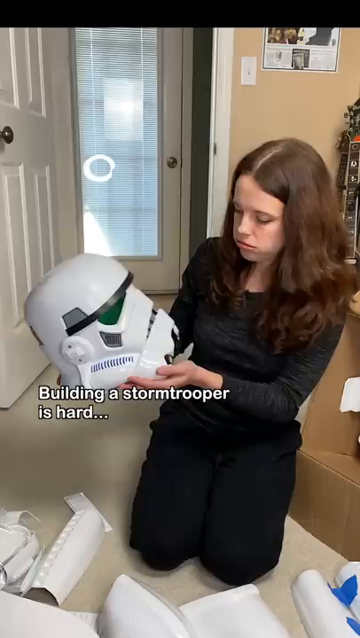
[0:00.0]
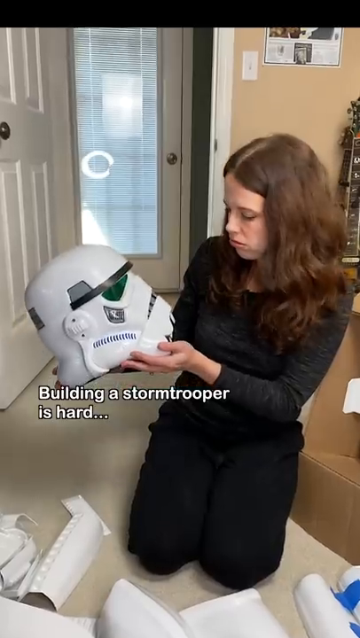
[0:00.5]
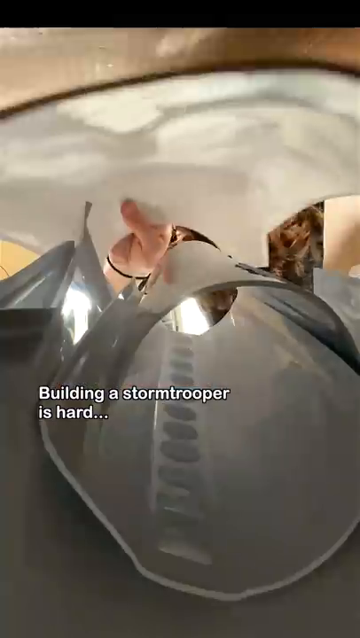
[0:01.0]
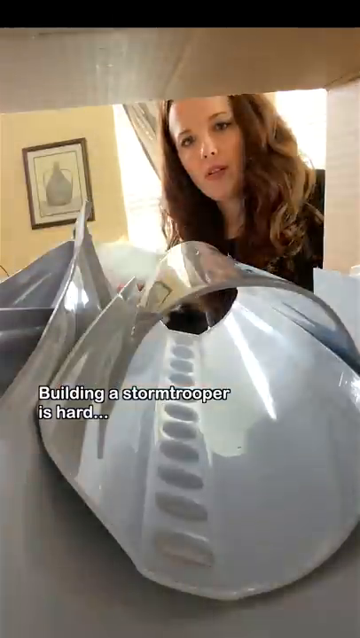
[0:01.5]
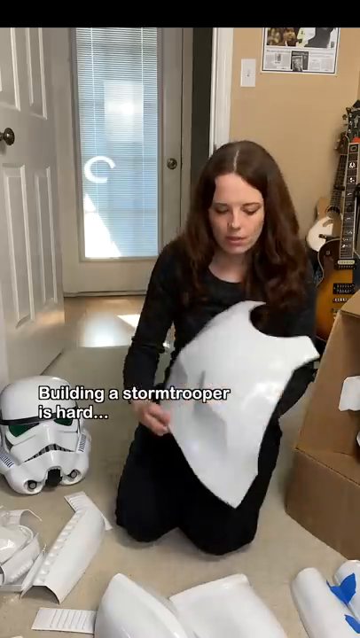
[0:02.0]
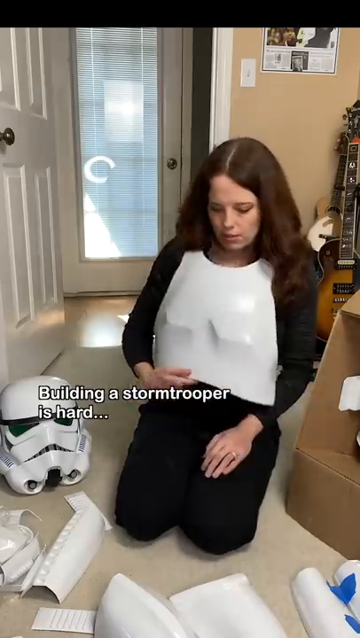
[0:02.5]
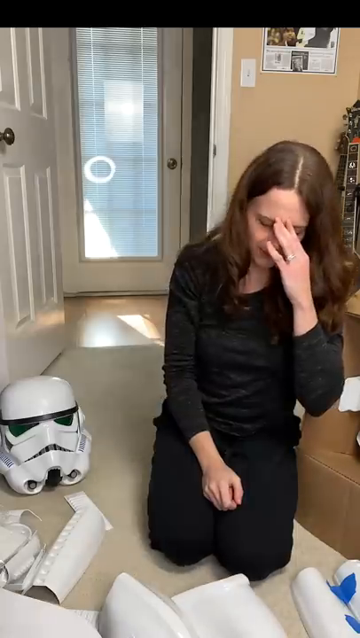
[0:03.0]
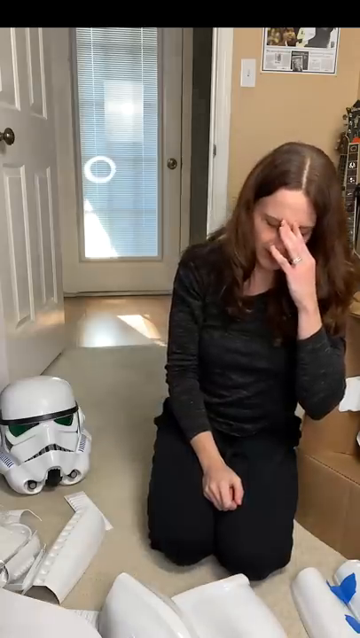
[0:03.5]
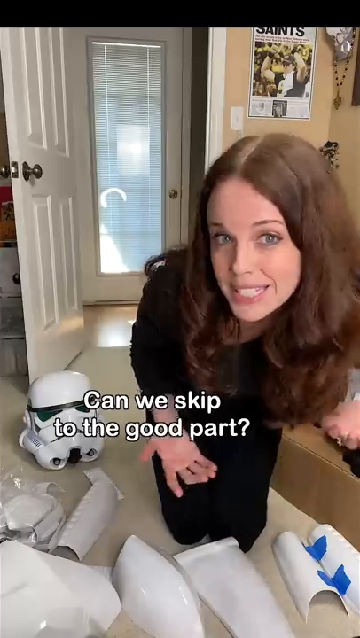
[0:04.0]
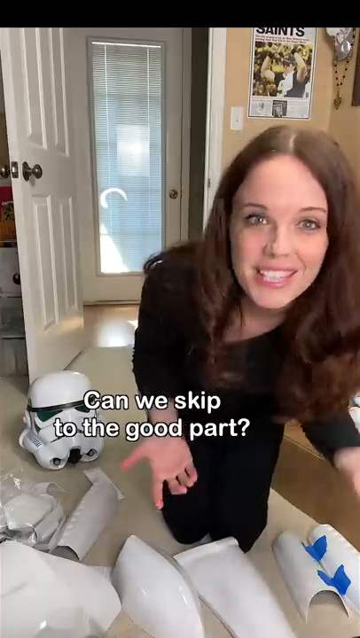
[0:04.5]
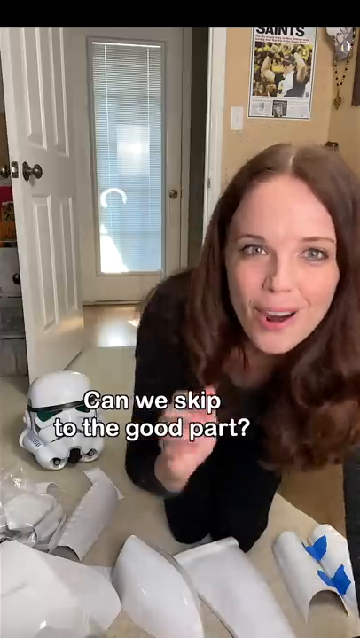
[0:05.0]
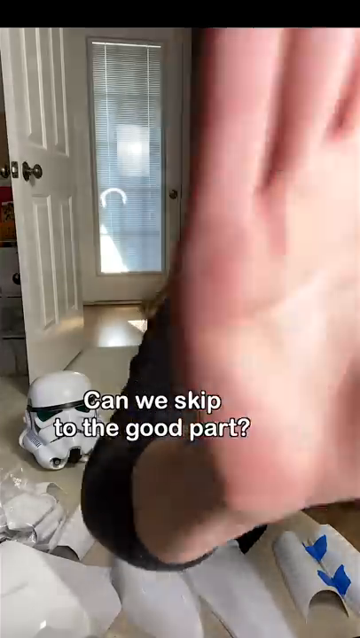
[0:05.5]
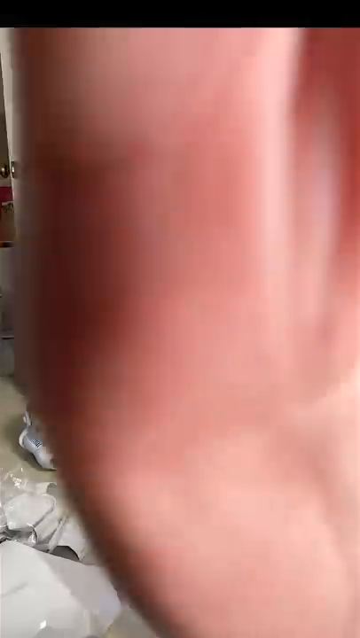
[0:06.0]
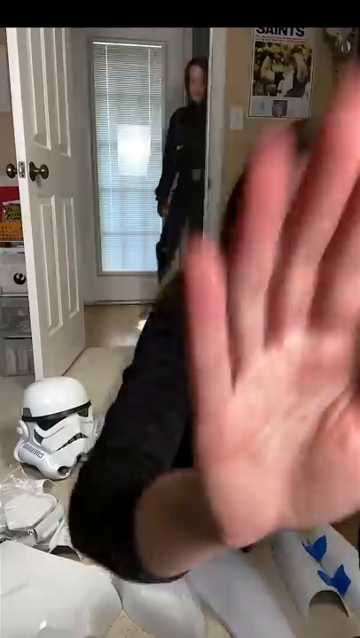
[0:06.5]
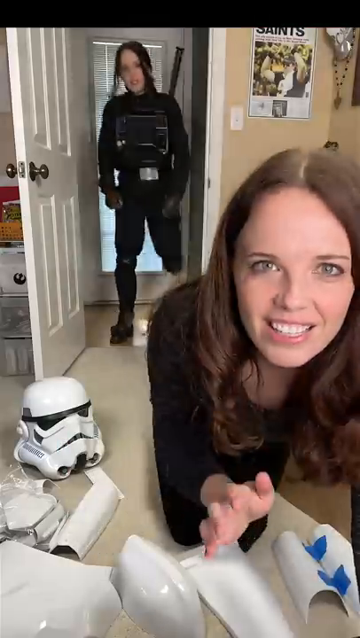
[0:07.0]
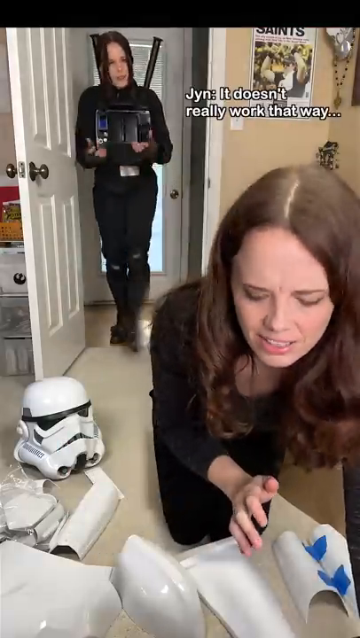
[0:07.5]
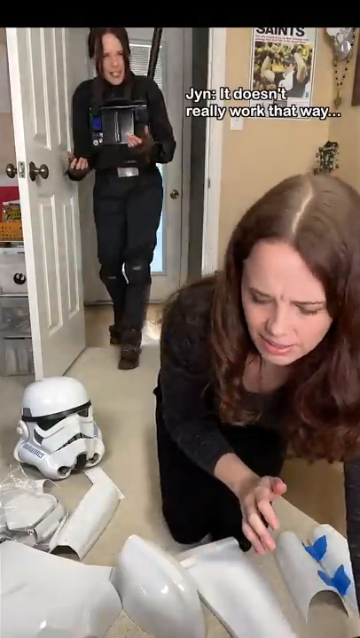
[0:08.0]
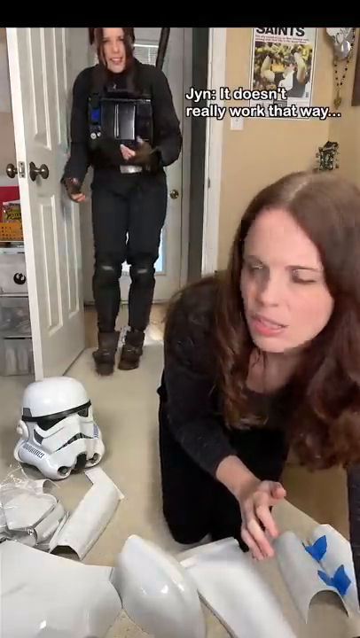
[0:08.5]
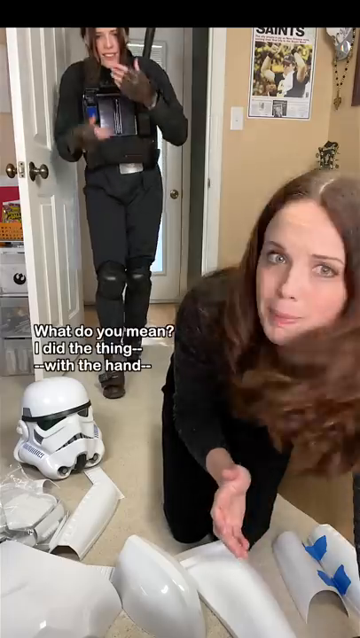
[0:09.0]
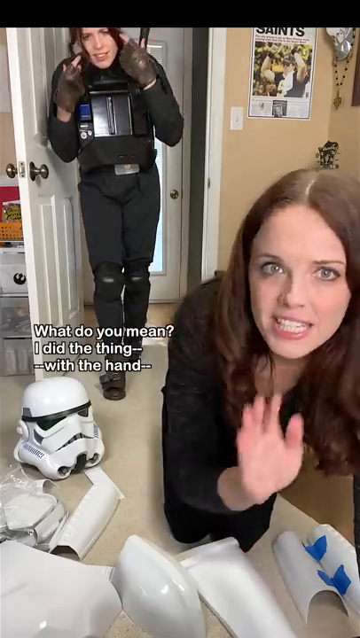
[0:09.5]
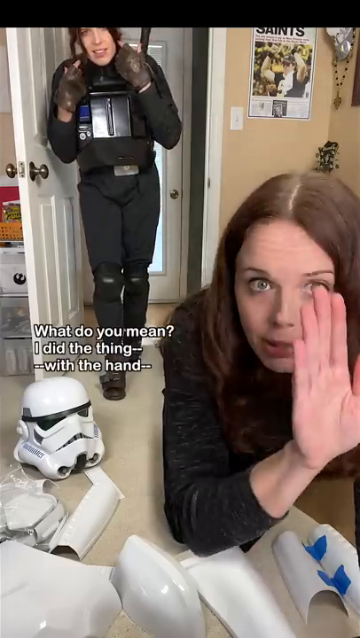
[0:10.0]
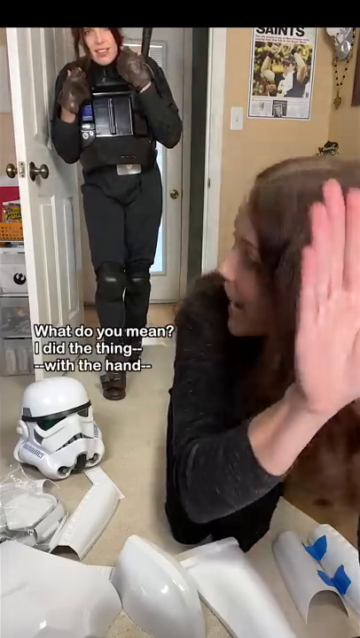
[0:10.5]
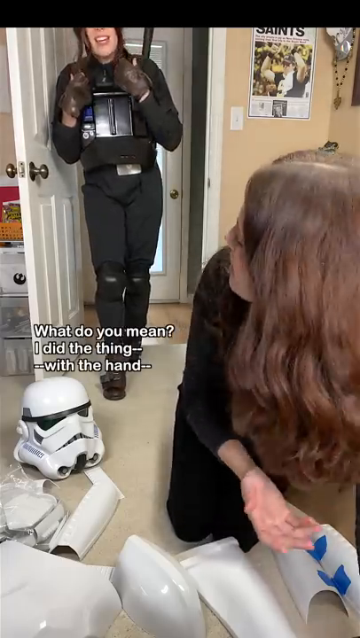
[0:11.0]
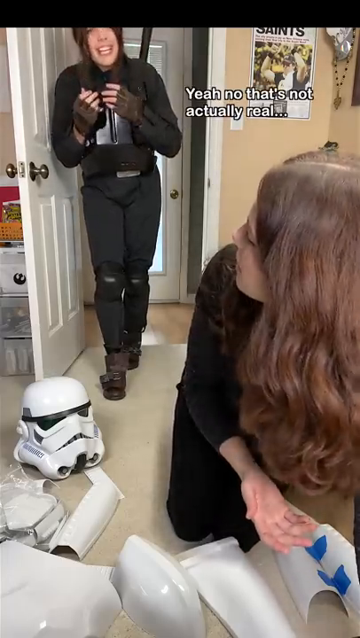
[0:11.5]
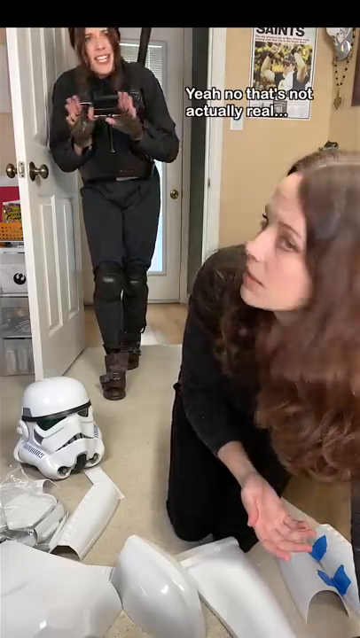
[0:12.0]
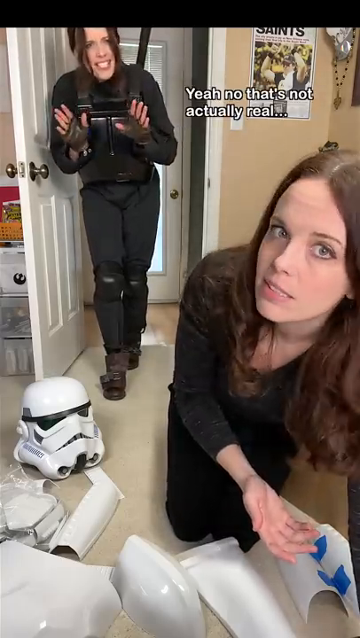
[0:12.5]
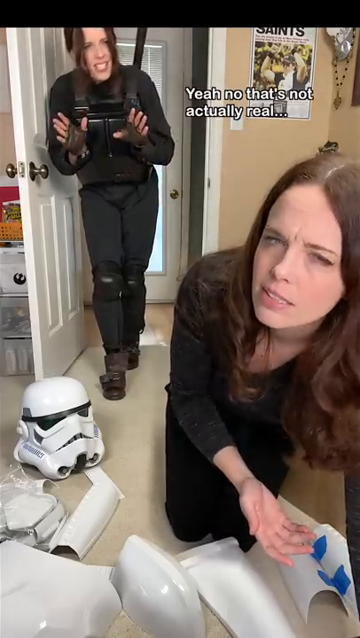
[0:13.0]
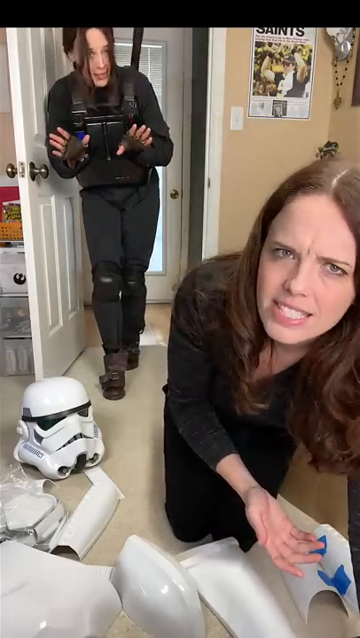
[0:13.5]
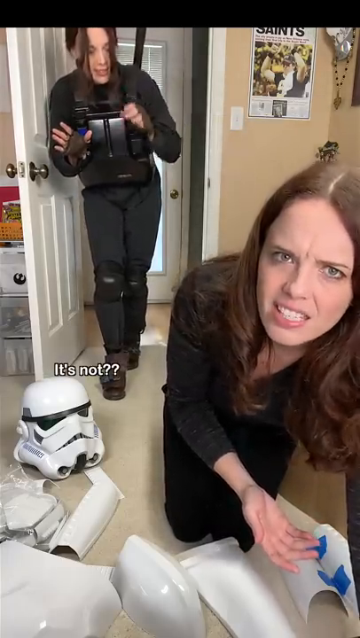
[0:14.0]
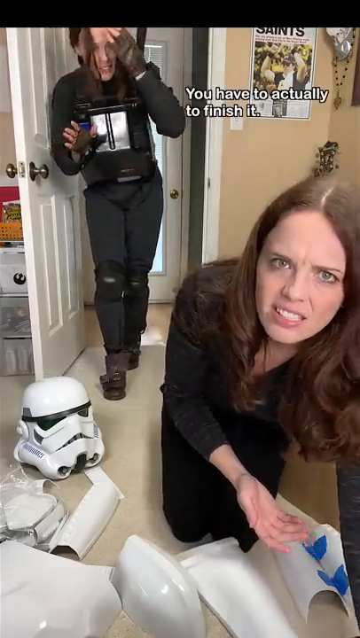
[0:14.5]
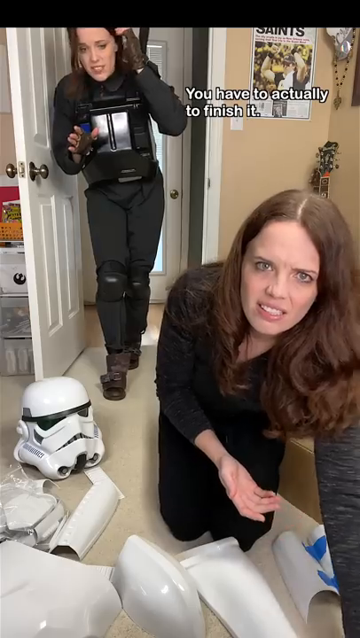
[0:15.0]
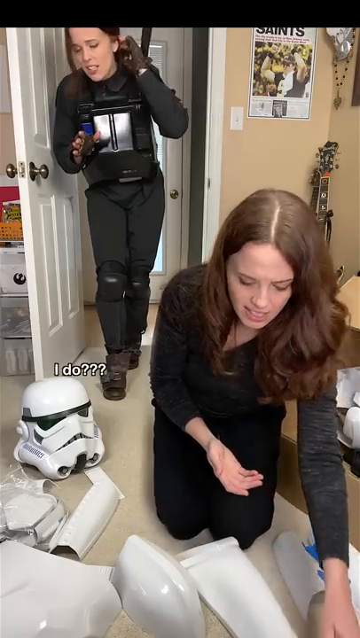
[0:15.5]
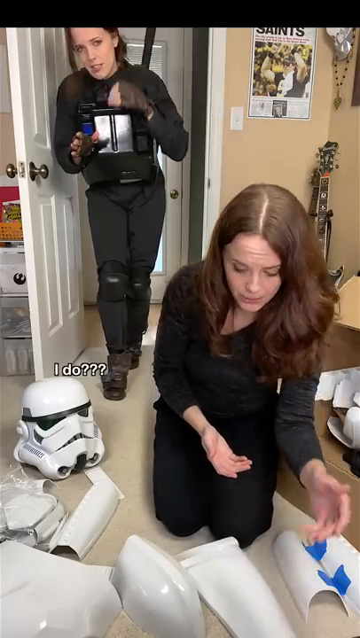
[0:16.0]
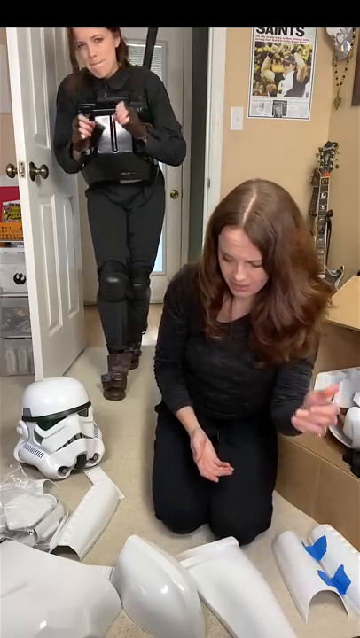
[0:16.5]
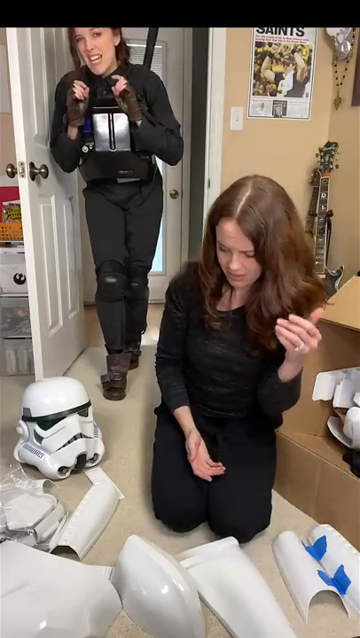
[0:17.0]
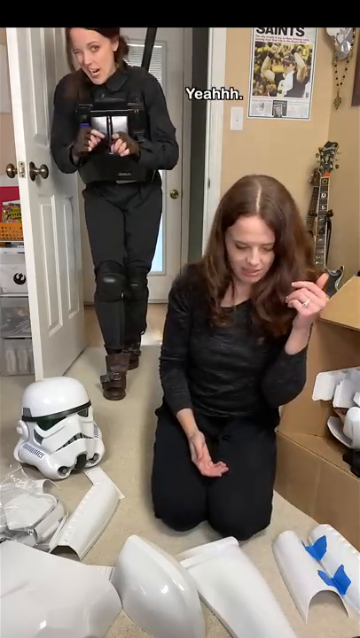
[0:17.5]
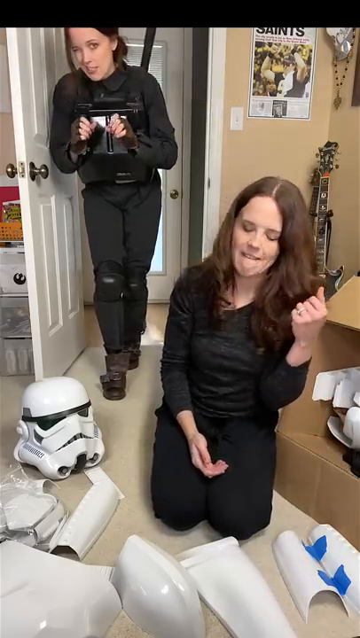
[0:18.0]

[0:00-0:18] The video is titled Stormtrooper Build Update. A little girl is on her knees, holding a Stormtrooper helmet in her hands. The shot cuts to her holding the Stormtrooper chest plate, and a caption reads "Can we skip to the good part." She puts her hand over the camera, and then an adult walks in wearing a black Stormtrooper outfit. Text reads "what do you mean I did the thing with the hand?" The girl seems to be talking to this person, who may be her mom or may be the girl herself in the outfit; it is unclear. Text then reads "but that's not actually real. You have to actually finish it." The Stormtrooper she is making is white and in pieces on the floor, so she apparently still has to finish it. She seems to be trying to be funny.